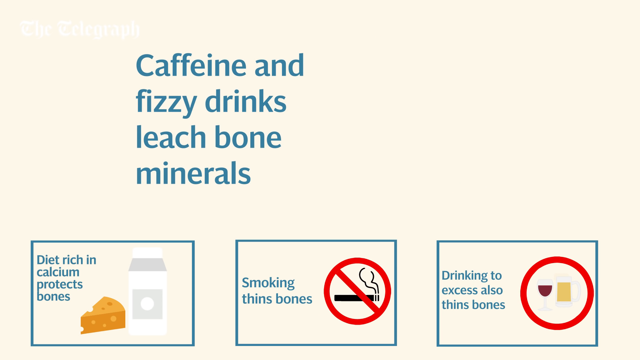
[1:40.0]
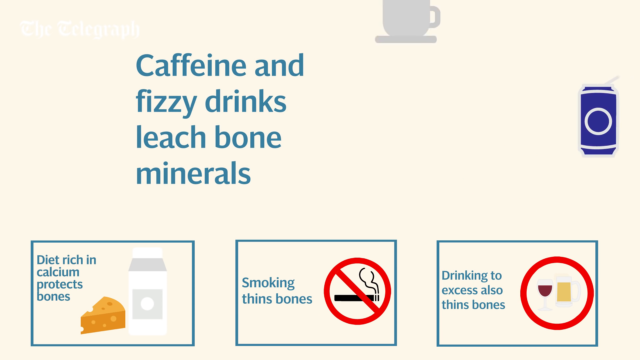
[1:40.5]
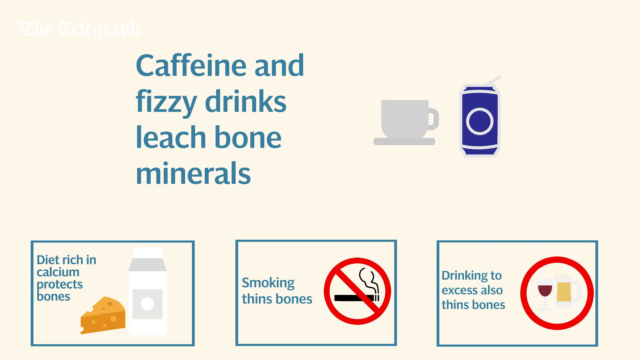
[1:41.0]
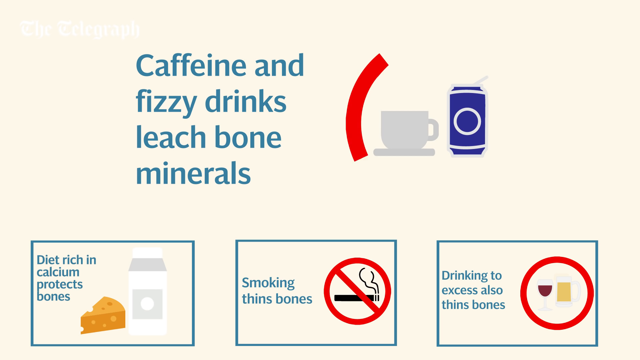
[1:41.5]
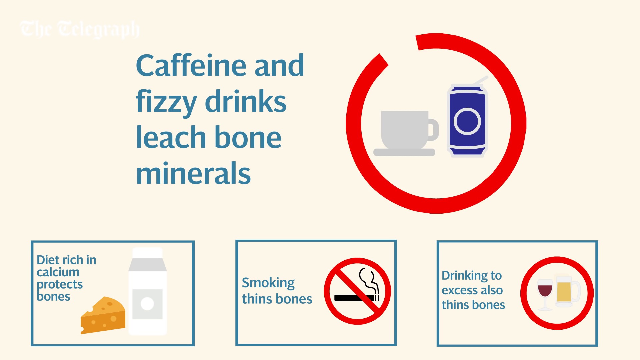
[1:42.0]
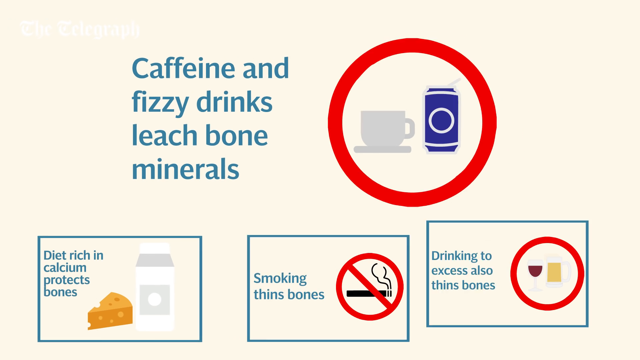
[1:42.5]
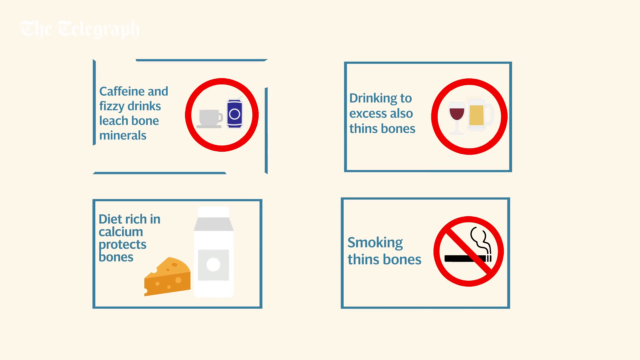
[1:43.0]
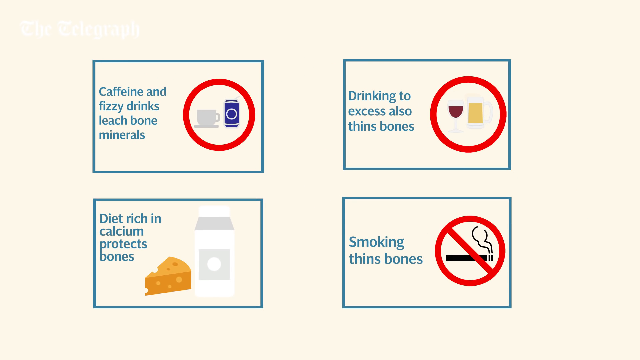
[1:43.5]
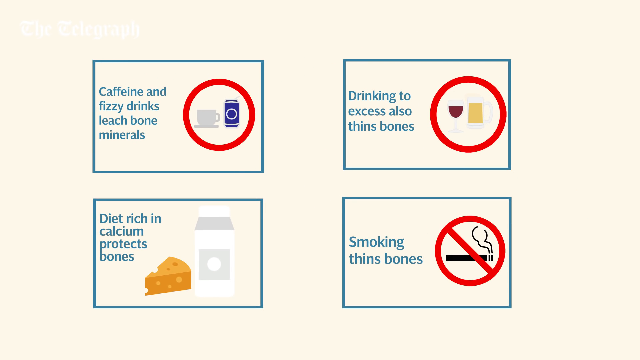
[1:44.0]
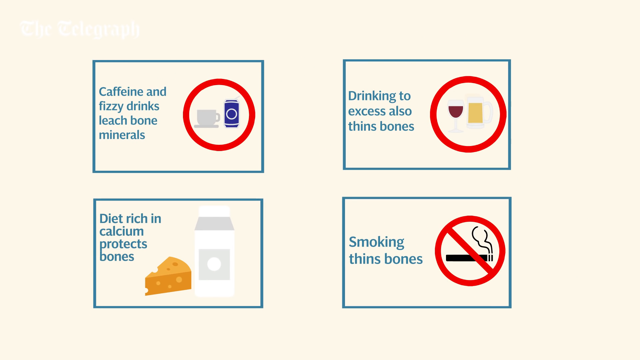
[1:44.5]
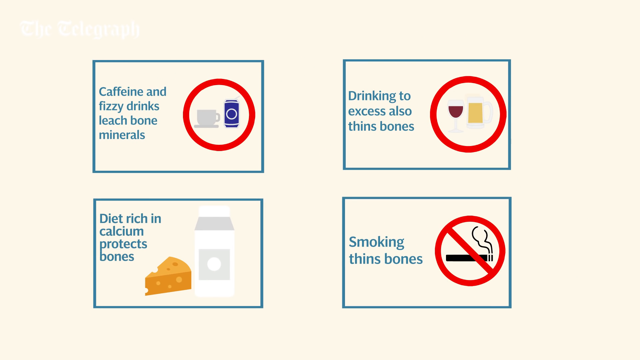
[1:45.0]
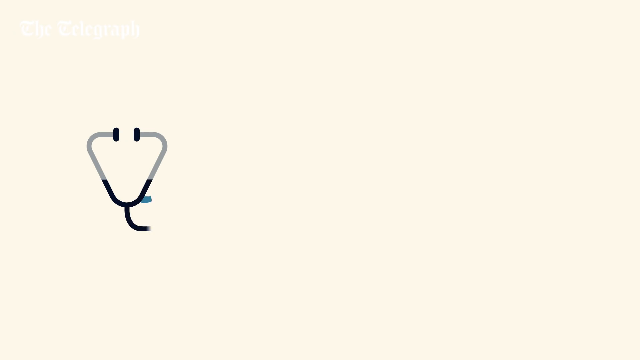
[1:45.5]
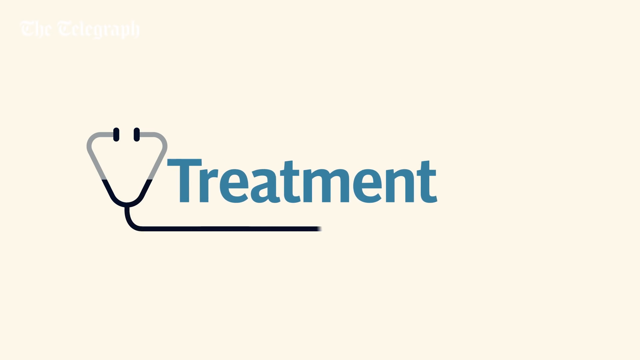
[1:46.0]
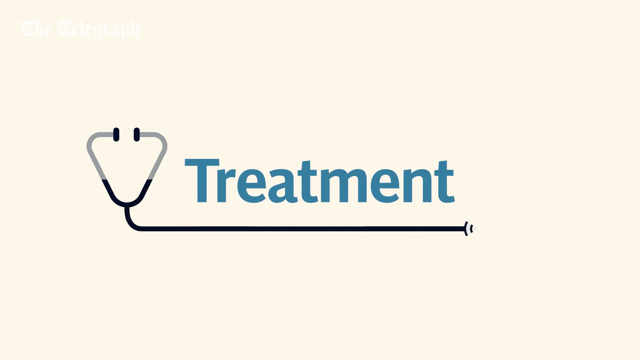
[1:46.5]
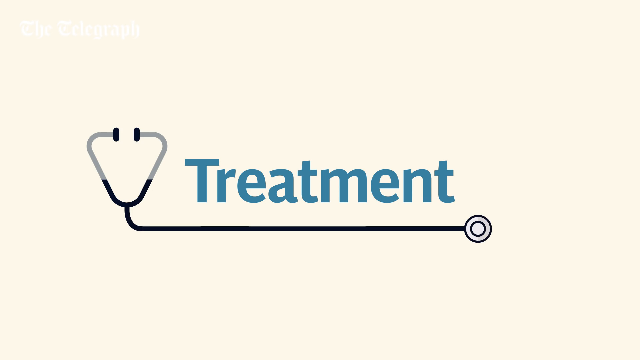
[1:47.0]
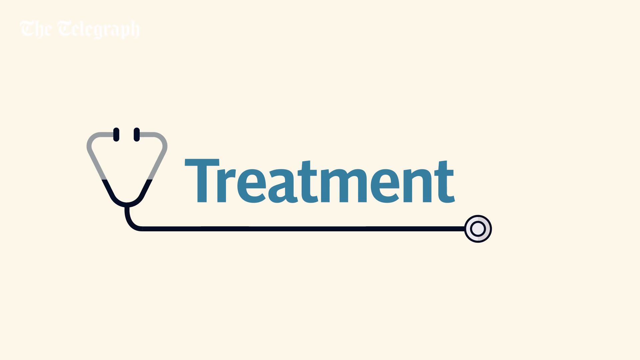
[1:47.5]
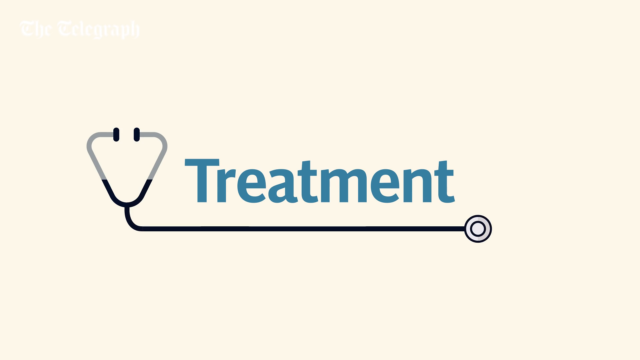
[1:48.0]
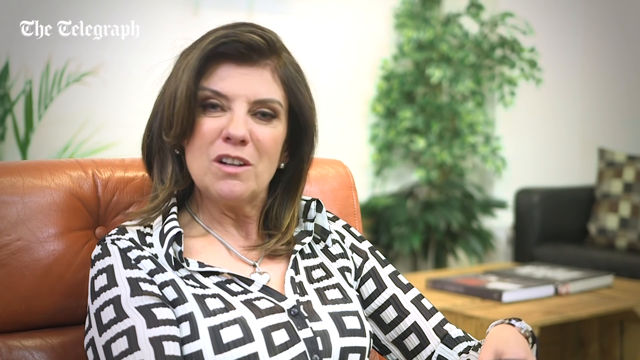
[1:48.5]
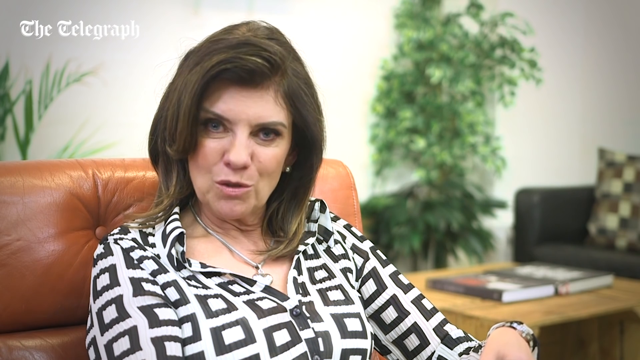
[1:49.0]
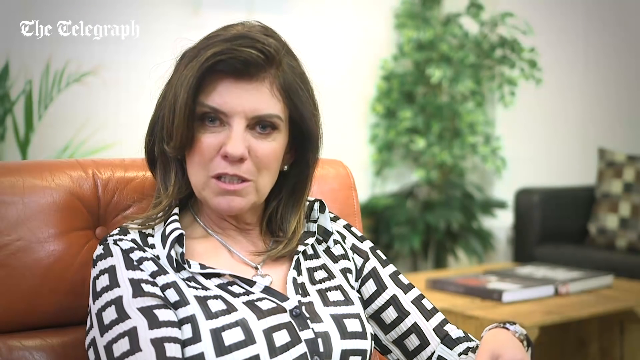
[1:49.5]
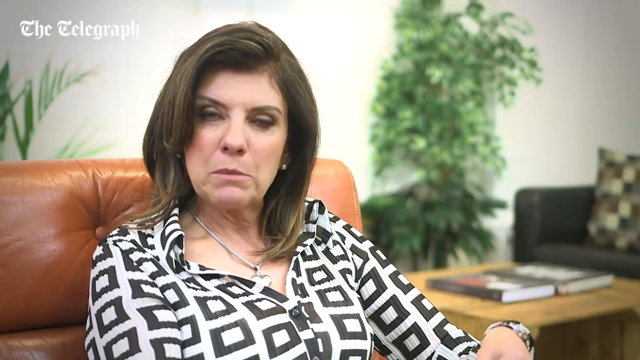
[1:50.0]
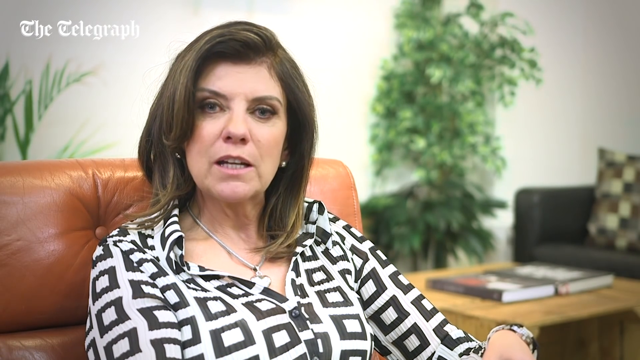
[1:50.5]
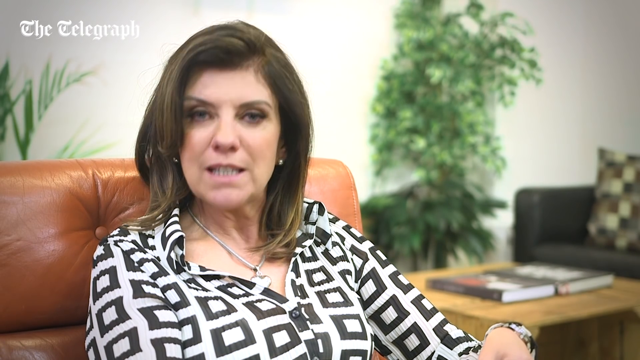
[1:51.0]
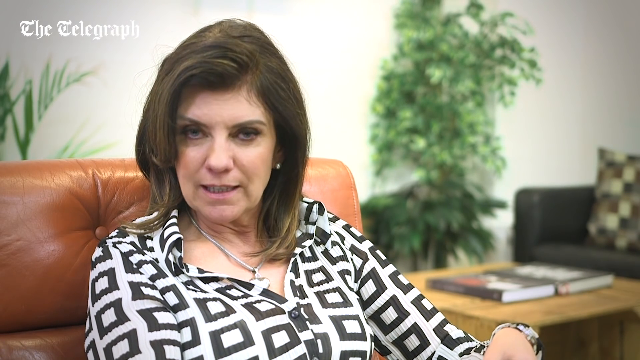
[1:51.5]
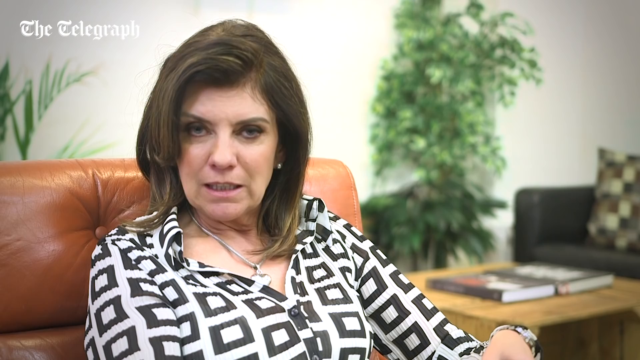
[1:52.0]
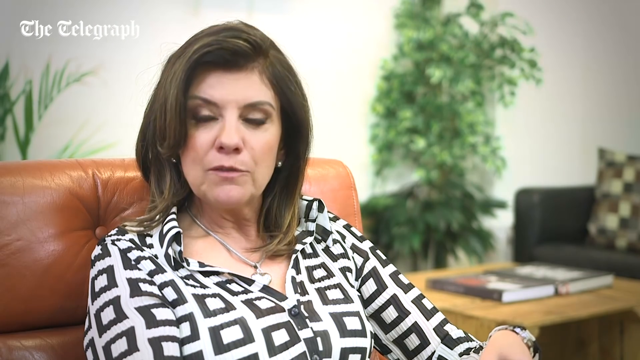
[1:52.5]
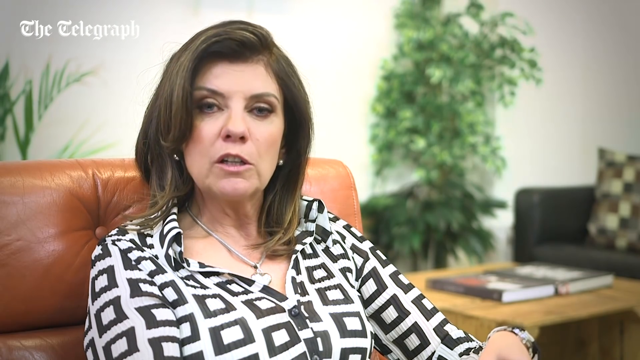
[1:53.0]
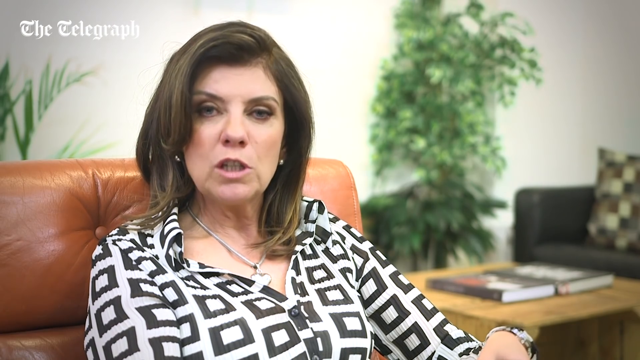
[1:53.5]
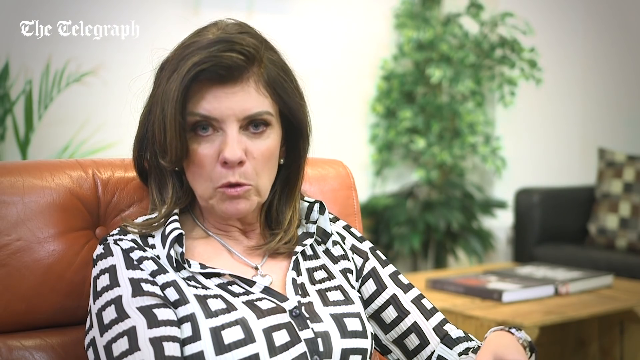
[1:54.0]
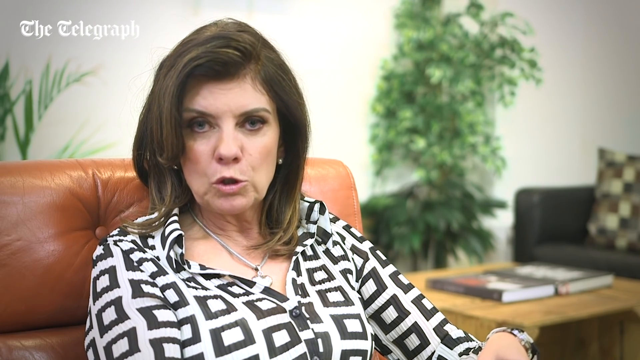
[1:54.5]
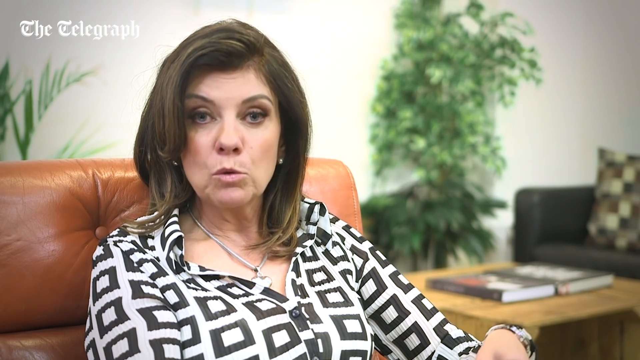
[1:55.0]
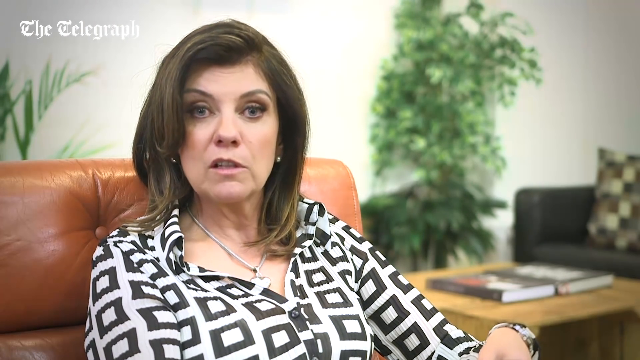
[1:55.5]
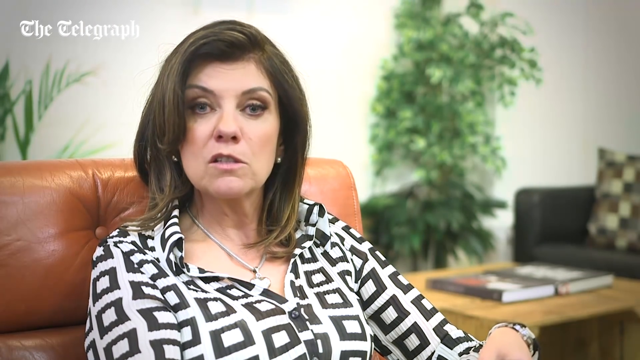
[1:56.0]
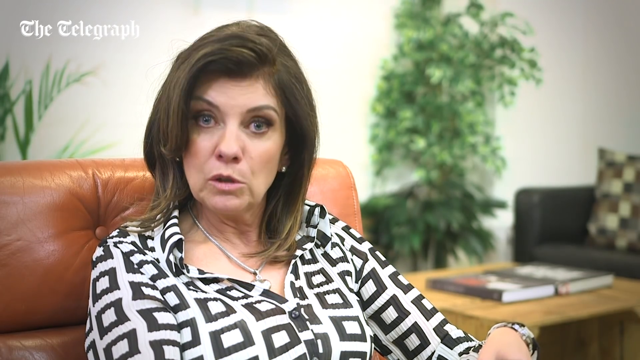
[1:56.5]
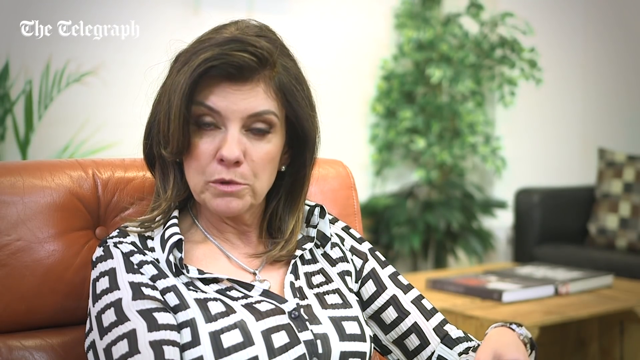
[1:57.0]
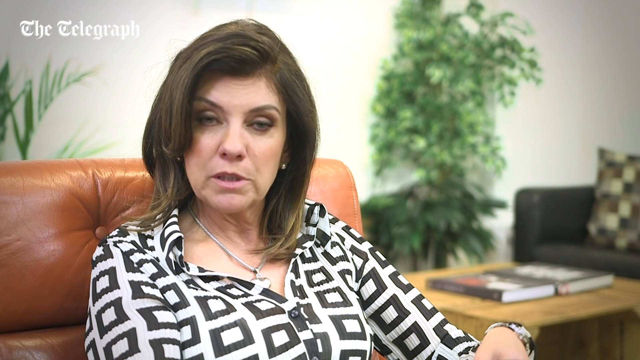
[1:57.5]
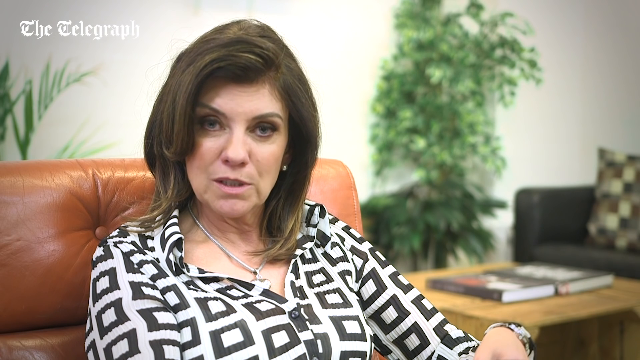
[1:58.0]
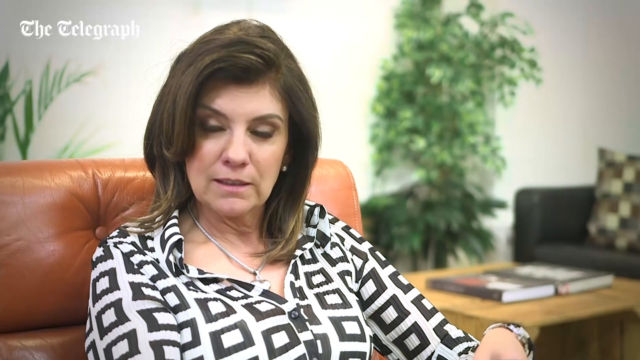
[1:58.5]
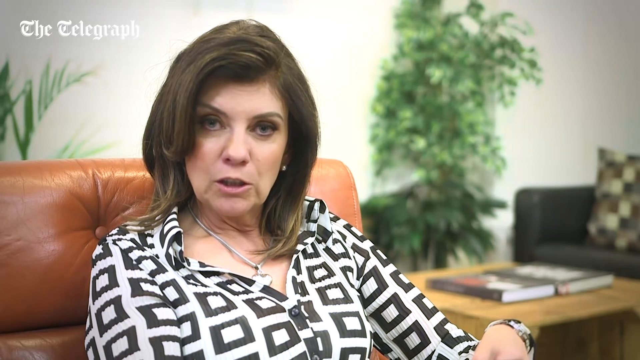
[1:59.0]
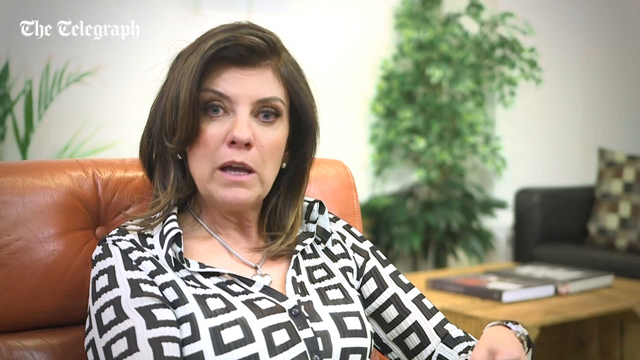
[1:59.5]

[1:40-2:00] Blue text at the top of the screen reads "caffeine and fizzy drinks leach bone minerals", with diagrams of a gray mug and a blue fizzy drink can, and a red circle goes around them. A blue box appears around this information as well, so there are now four boxes on the screen—smoking, drinking to excess, diet rich in calcium, and caffeine and fizzy drinks—taking up the four corners of the screen. The stethoscope comes out from the bottom to underline the next heading, "treatment", in bold blue text. The doctor then reappears, talking directly into the camera with the same background, moving her head and nodding as she speaks; she is very engaged with the camera and makes direct eye contact with the lens.